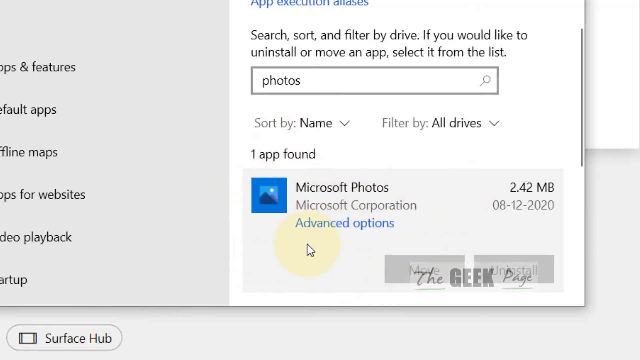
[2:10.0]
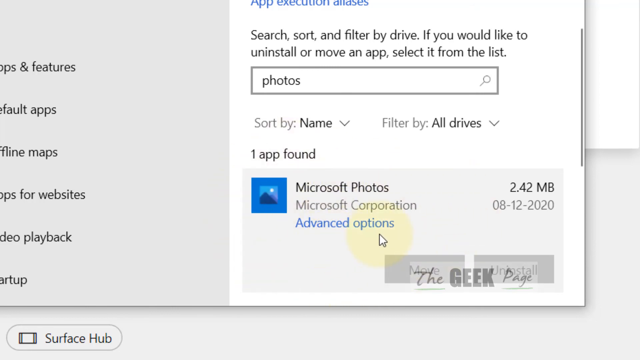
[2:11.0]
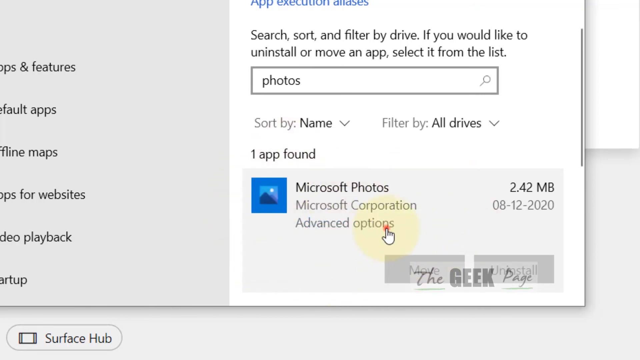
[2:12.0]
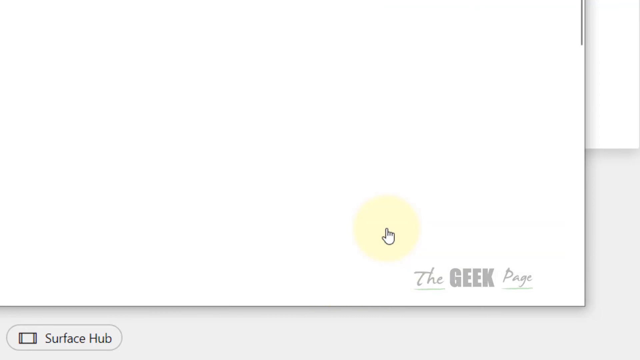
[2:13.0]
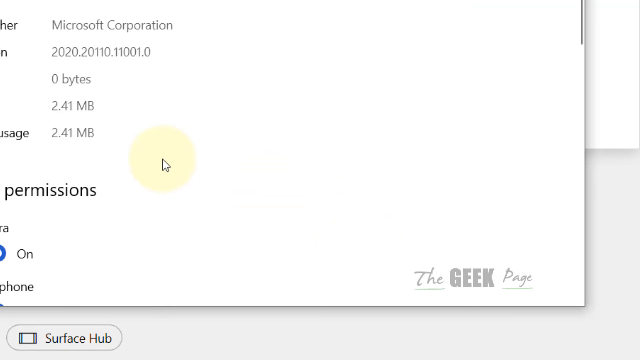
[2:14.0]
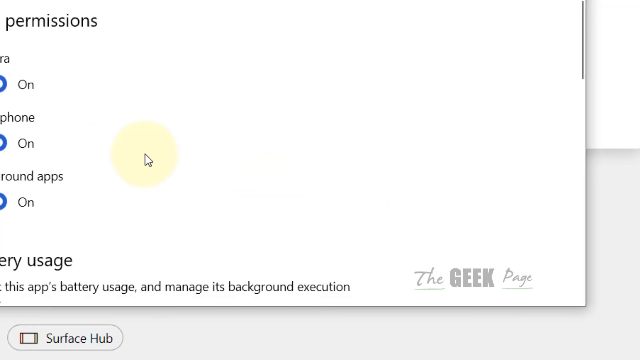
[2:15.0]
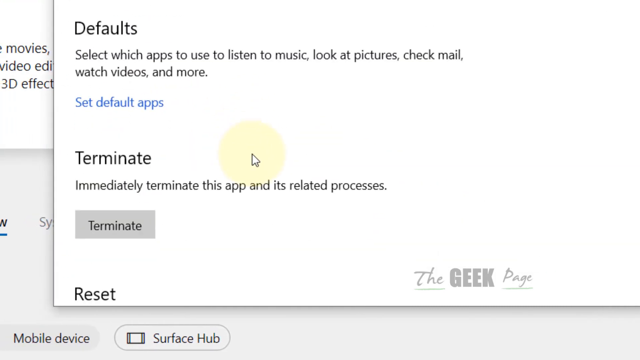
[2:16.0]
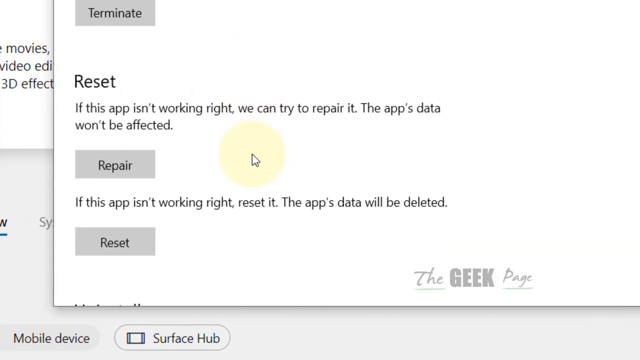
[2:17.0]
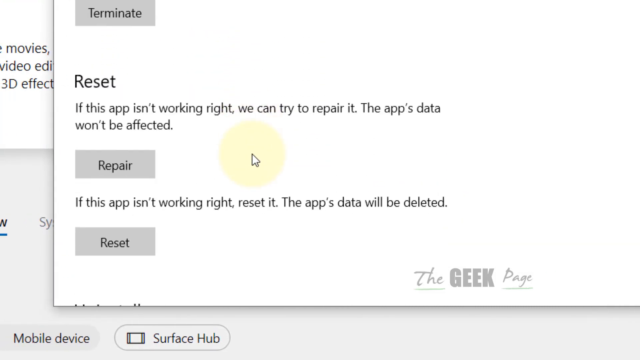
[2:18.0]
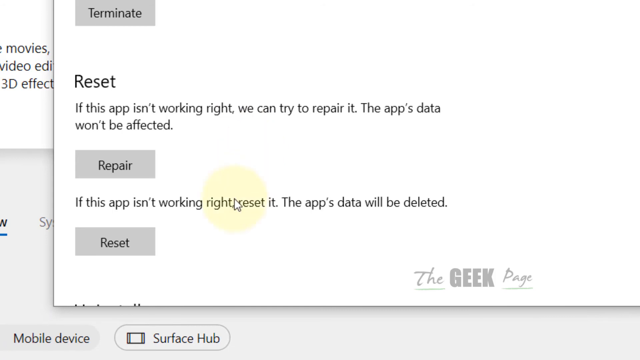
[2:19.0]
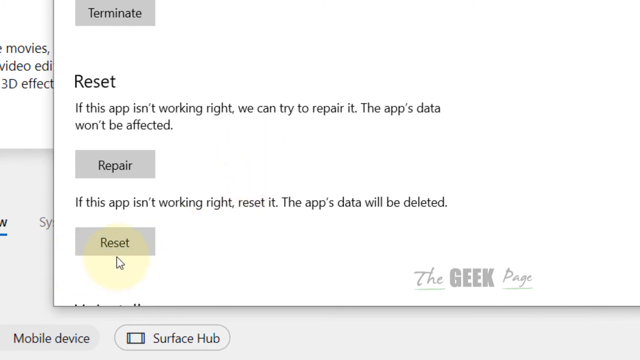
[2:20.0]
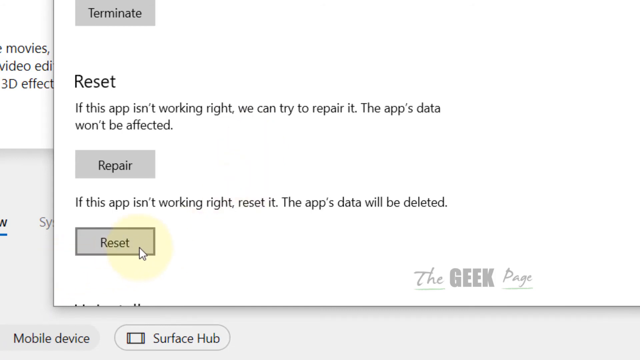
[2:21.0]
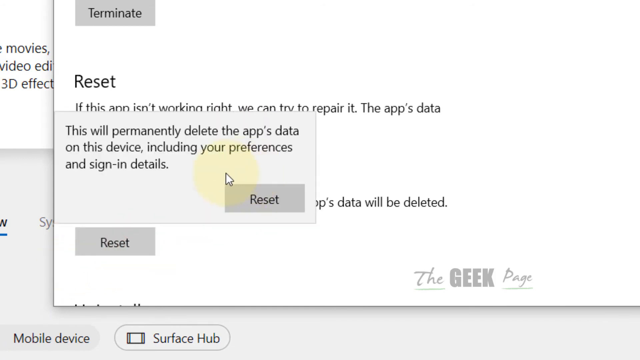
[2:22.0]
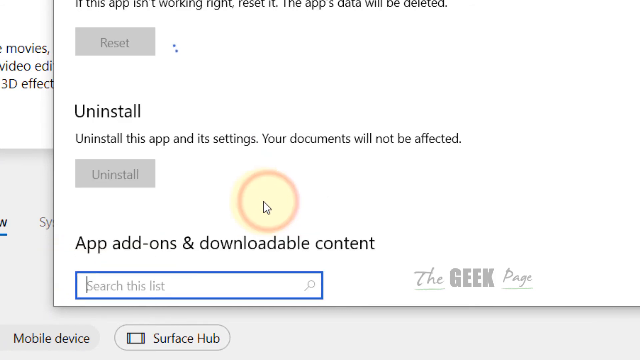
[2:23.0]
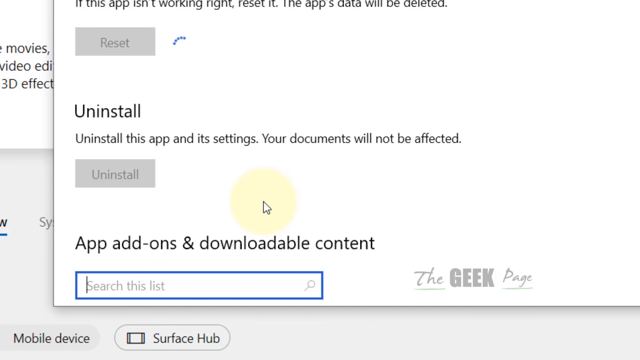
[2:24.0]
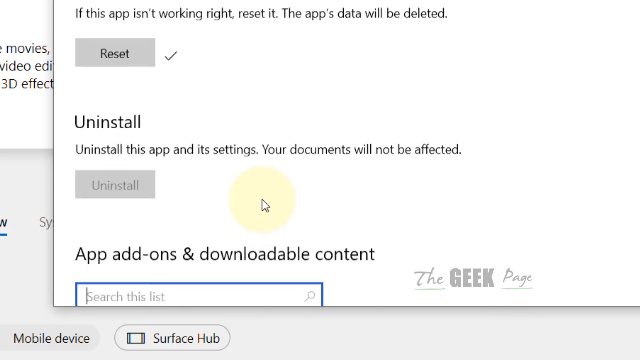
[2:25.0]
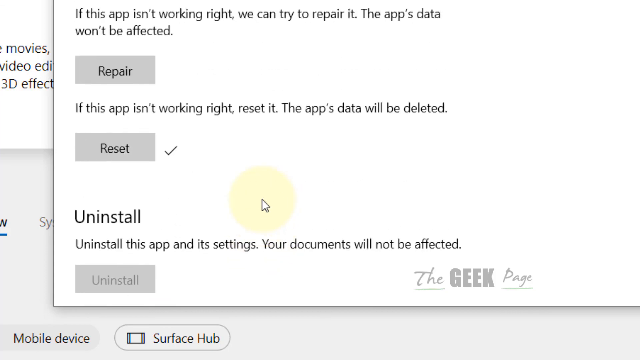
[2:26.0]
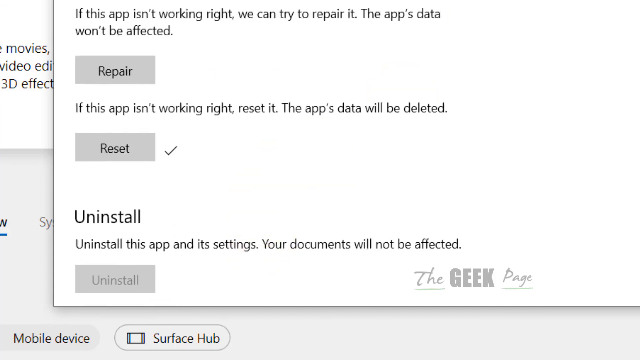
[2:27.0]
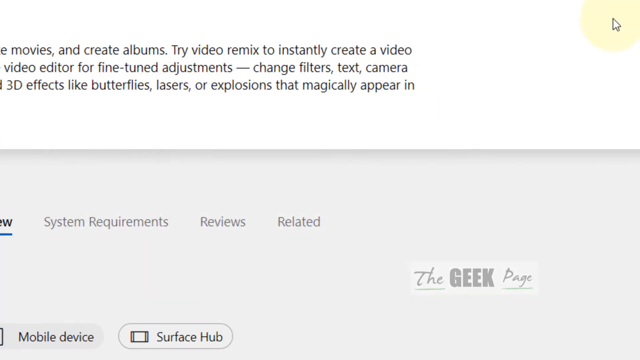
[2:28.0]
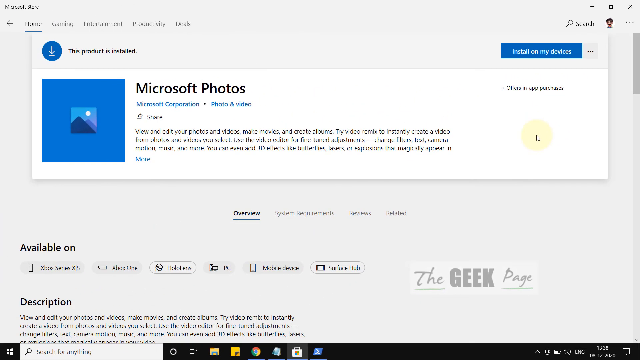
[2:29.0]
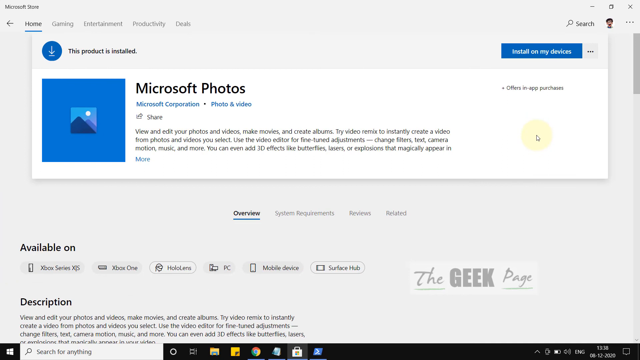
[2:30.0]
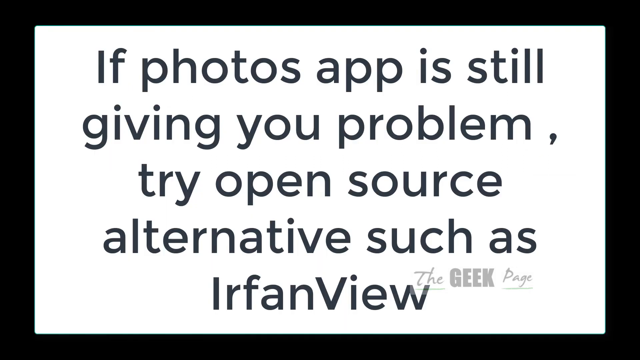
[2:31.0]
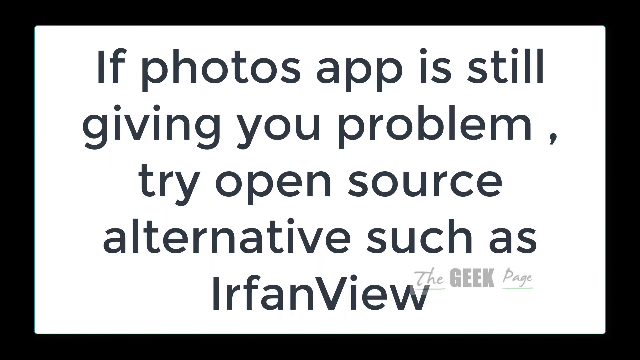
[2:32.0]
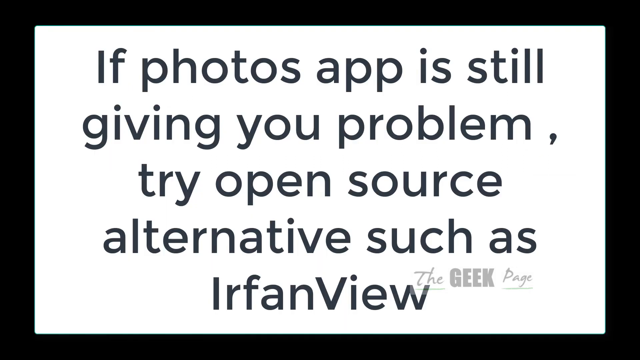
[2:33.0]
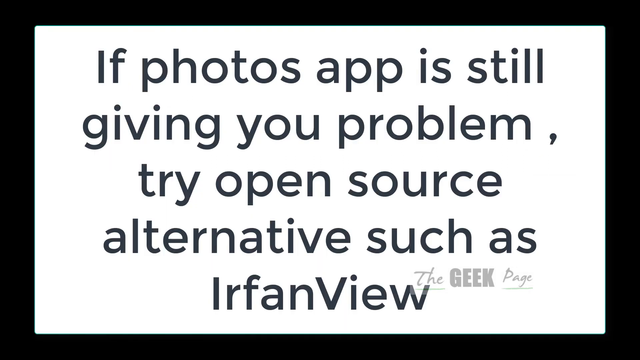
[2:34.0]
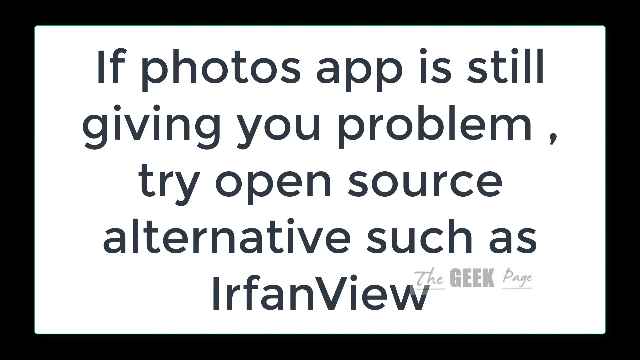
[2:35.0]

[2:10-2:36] On a computer monitor screen, a pop-up reads "app execution aliases" in the center, slightly off to the right. Below it, black text reads "search, sort, and filter by drive. If you would like to uninstall or move an app, select it from the list." Below is a white search box in which someone has typed the word "photos", and beneath that the option "sort by name" with a pull-down arrow, with "filter by all drives" and a pull-down to its right. Beneath that is the icon for Microsoft Photos, which appears to be mountains and a moon, and under the words "Microsoft Photos" in black text it reads "Microsoft Corporation" and "Advanced Options". "The Geek Page" is in the lower right corner. The mouse travels around and clicks on Advanced Options. Scrolling downward past many words, it ends up at the area that reads "Reset" with a button. It clicks Reset, and the message "This will permanently delete the app's data on this device, including your preferences and sign-in details." suddenly appears. The word Reset is clicked, and the "Repair", "Reset" and "Uninstall" buttons suddenly appear in a light gray color. The scene ends with a white background and black text that reads "If Photos App is still giving you a problem, try open source alternatives such as Irfan View."